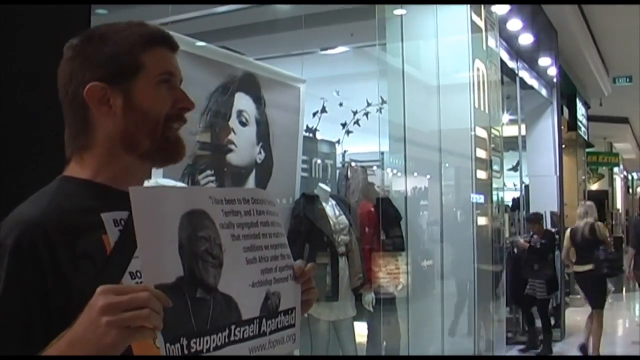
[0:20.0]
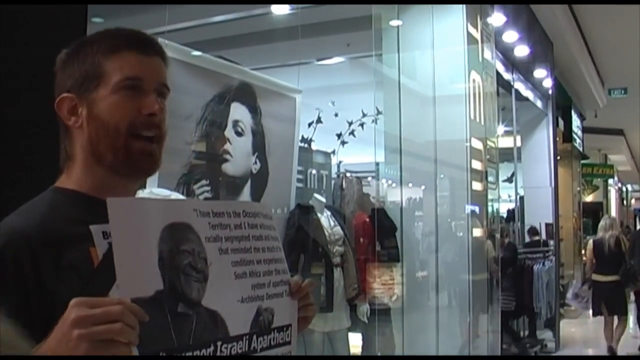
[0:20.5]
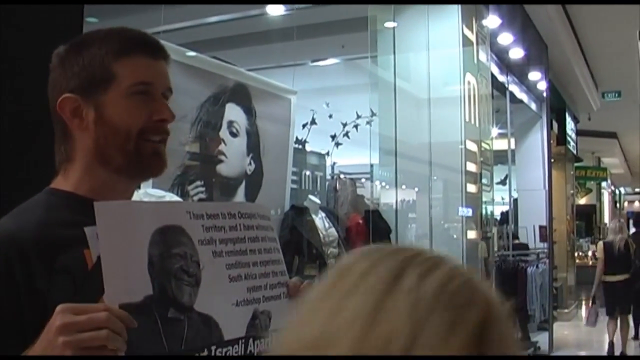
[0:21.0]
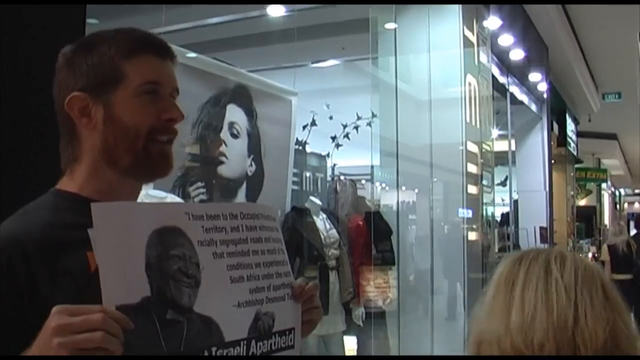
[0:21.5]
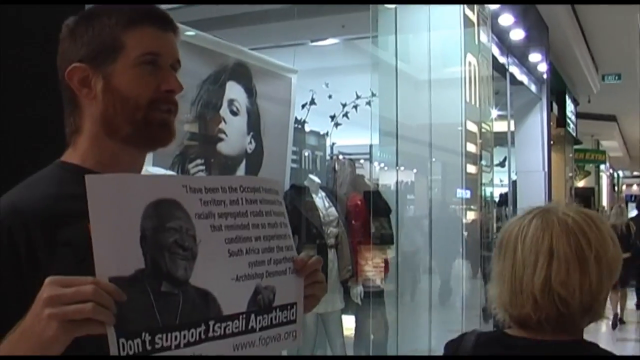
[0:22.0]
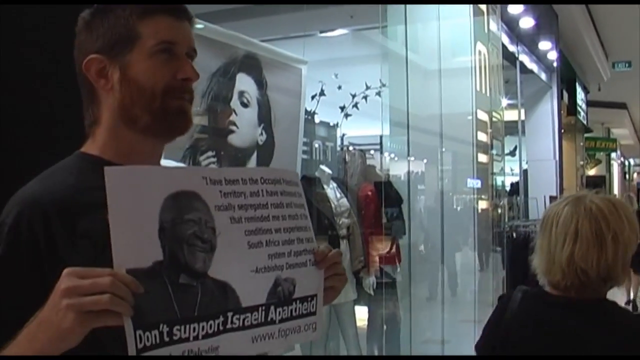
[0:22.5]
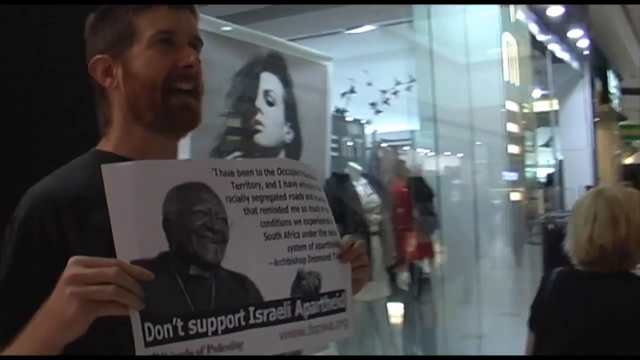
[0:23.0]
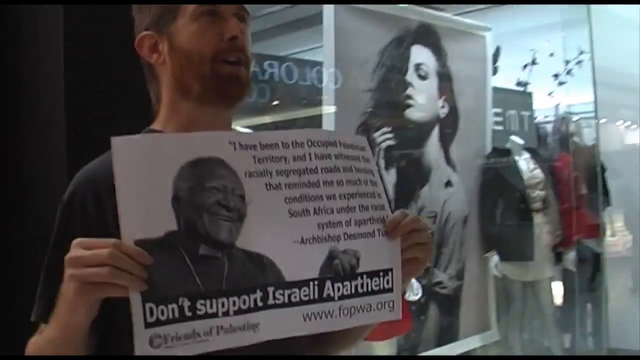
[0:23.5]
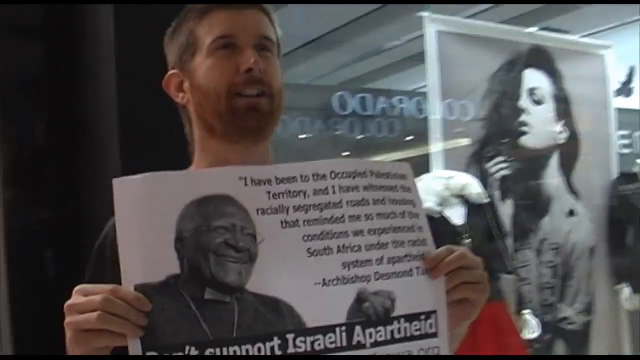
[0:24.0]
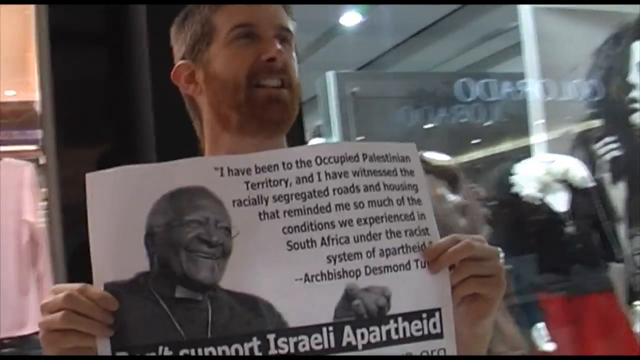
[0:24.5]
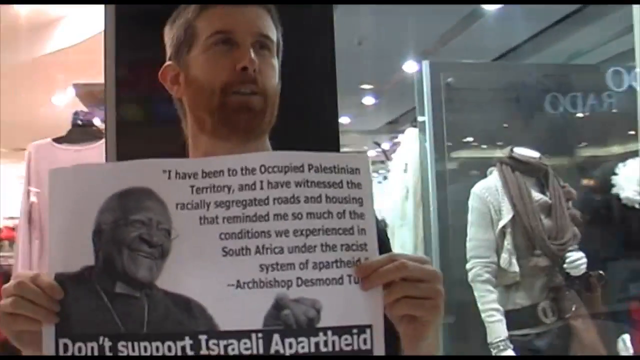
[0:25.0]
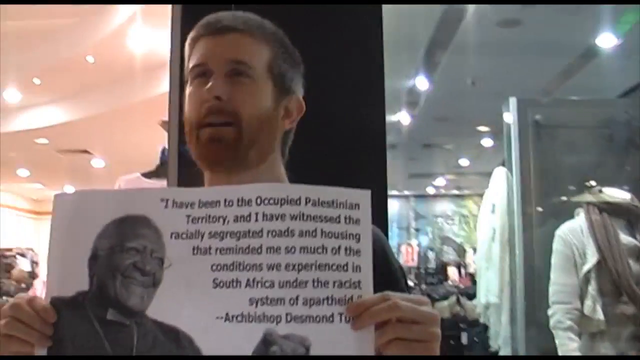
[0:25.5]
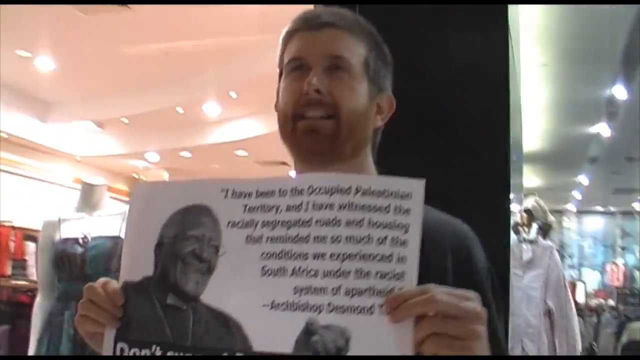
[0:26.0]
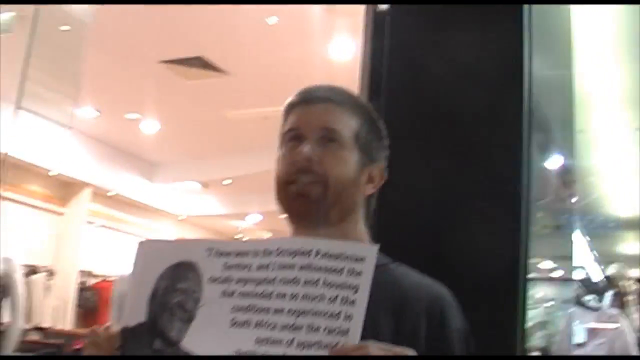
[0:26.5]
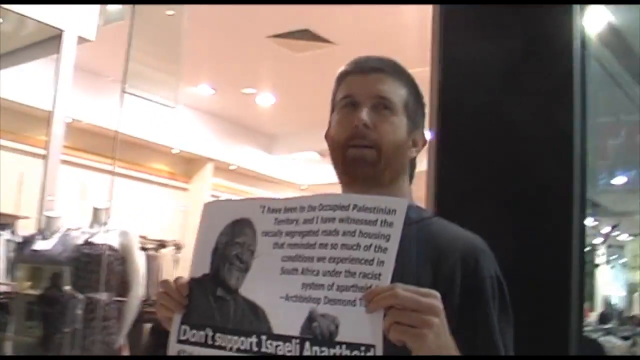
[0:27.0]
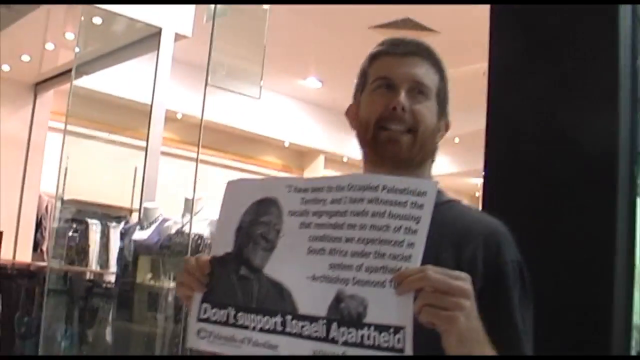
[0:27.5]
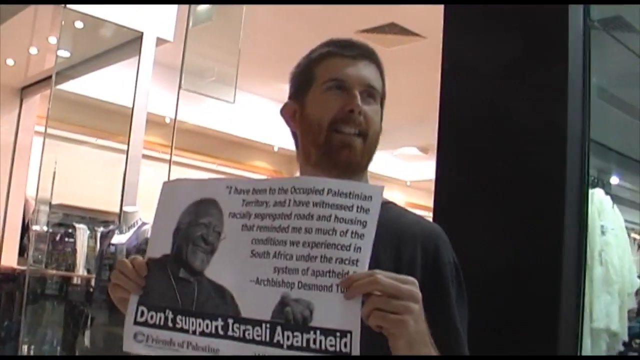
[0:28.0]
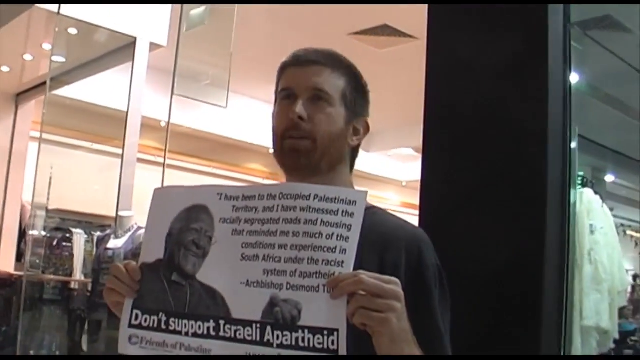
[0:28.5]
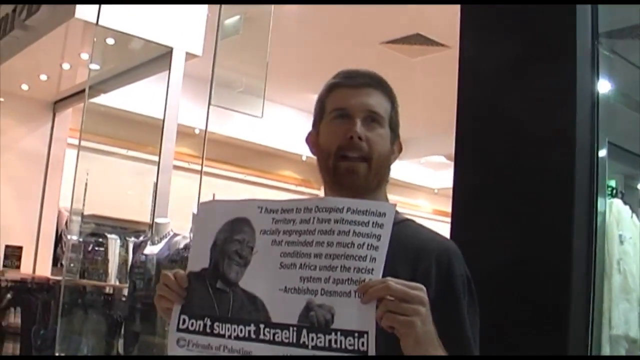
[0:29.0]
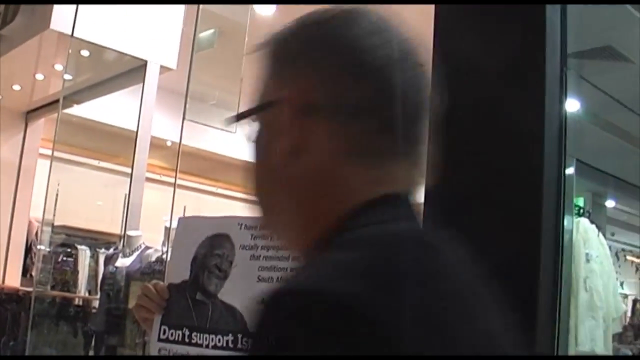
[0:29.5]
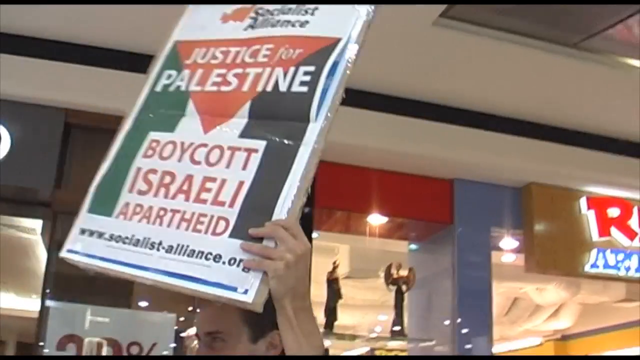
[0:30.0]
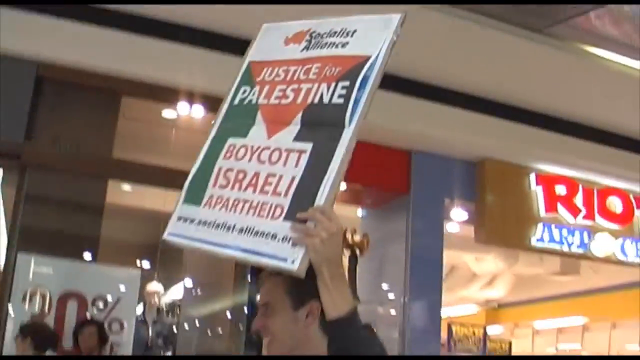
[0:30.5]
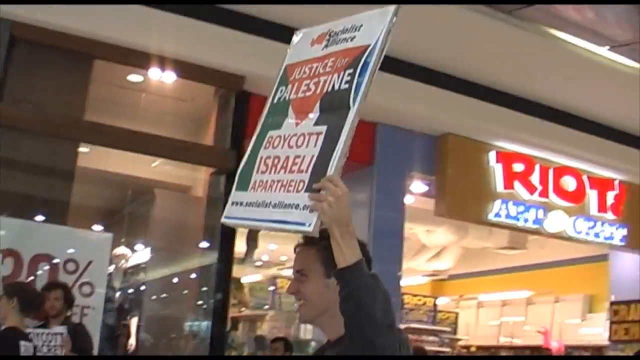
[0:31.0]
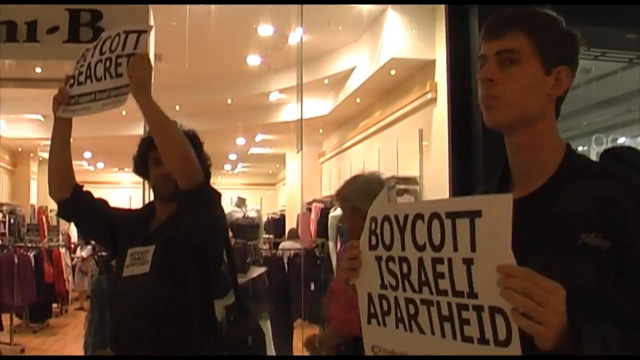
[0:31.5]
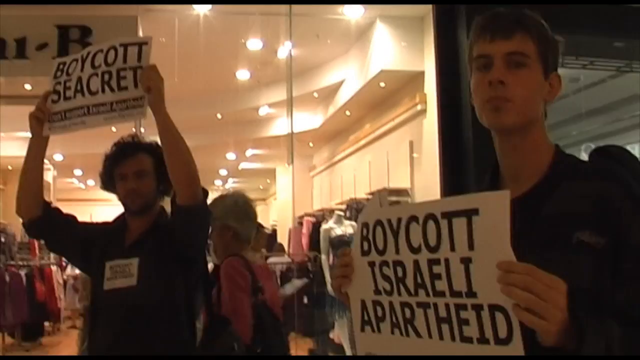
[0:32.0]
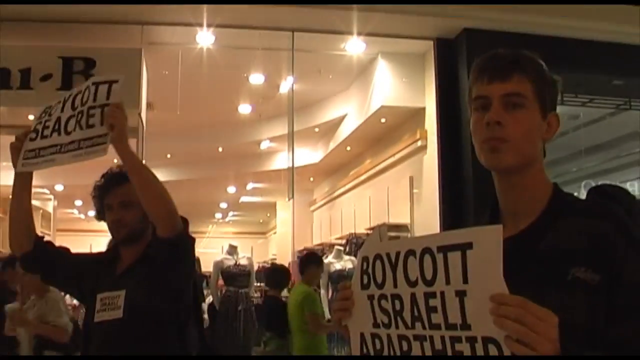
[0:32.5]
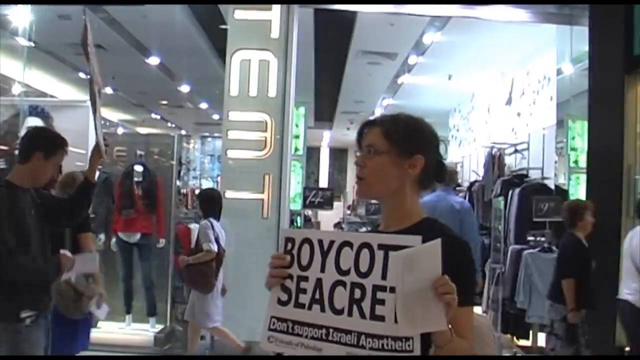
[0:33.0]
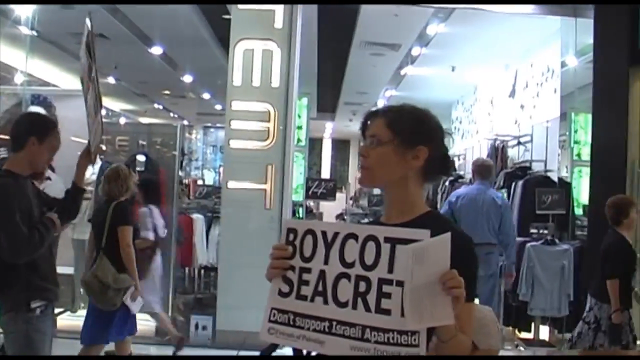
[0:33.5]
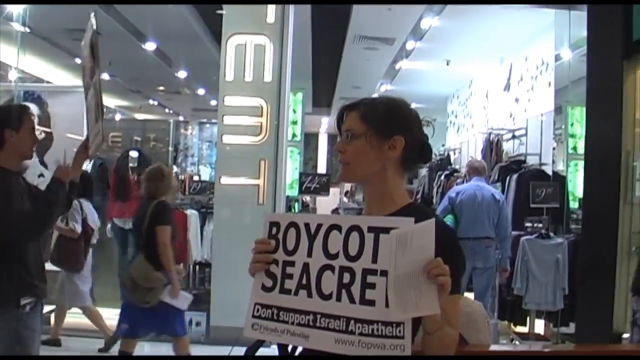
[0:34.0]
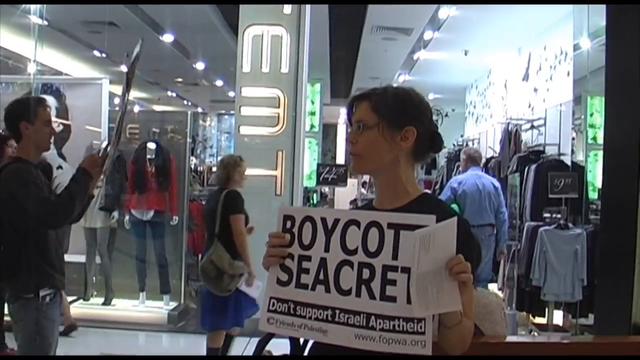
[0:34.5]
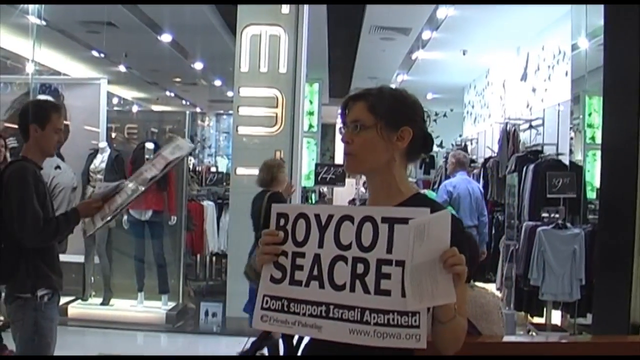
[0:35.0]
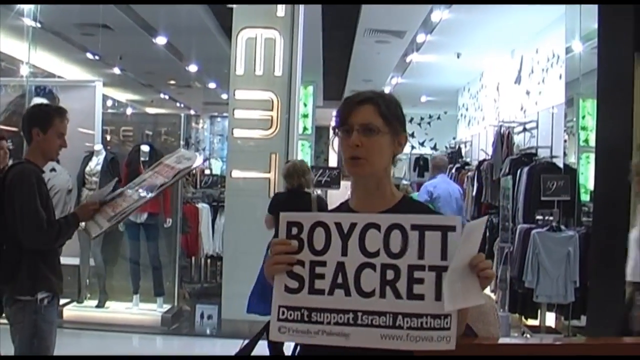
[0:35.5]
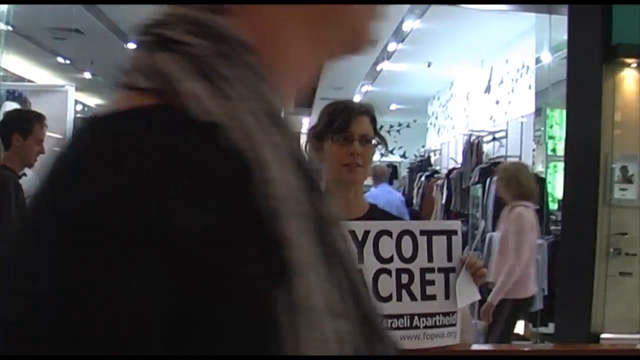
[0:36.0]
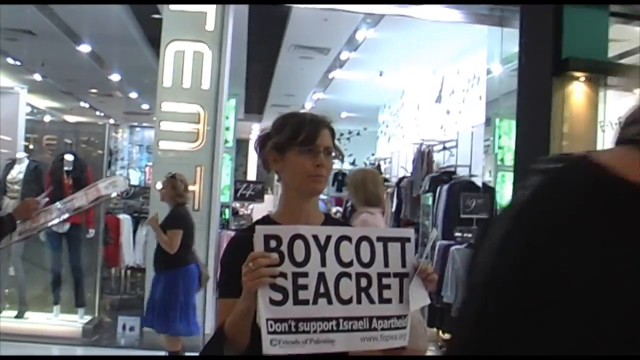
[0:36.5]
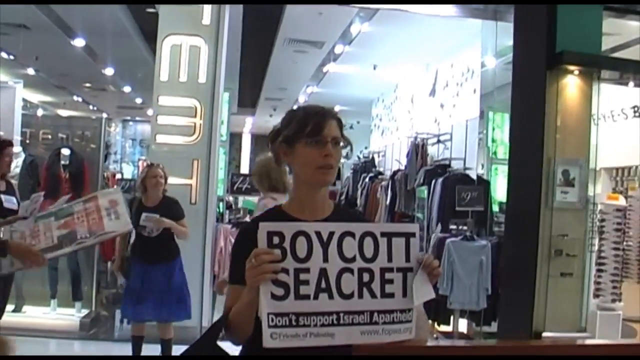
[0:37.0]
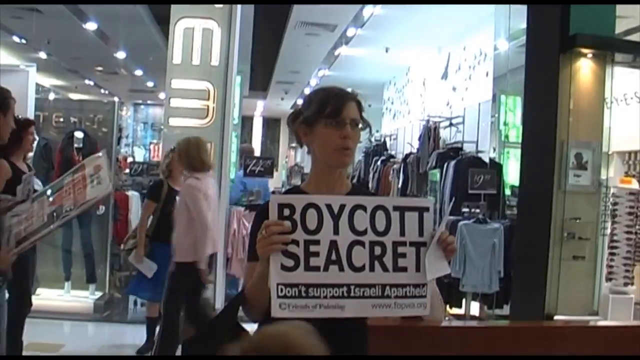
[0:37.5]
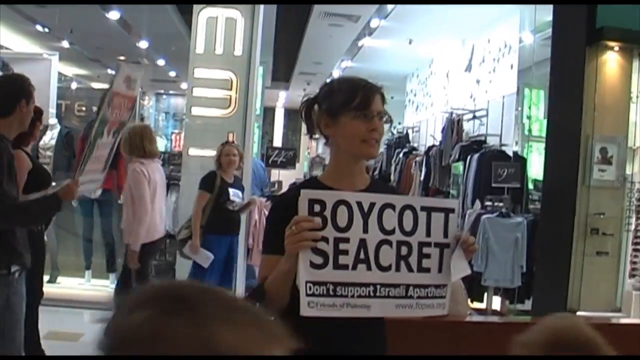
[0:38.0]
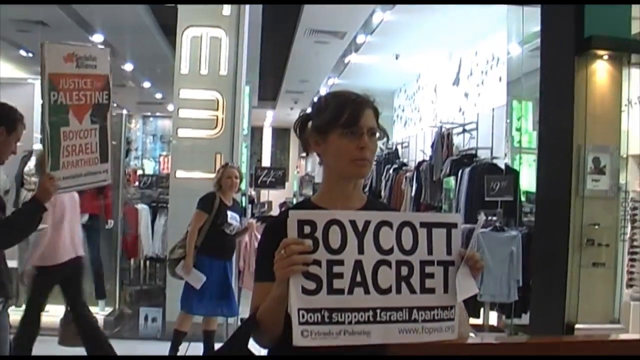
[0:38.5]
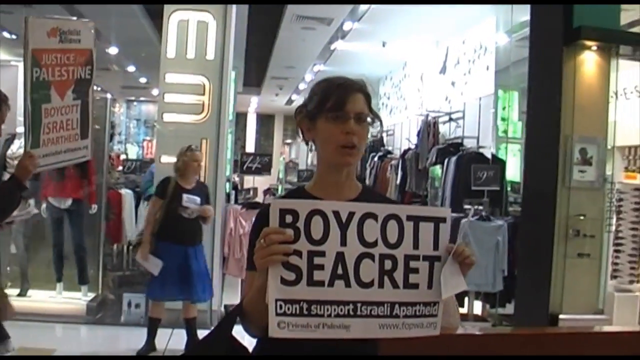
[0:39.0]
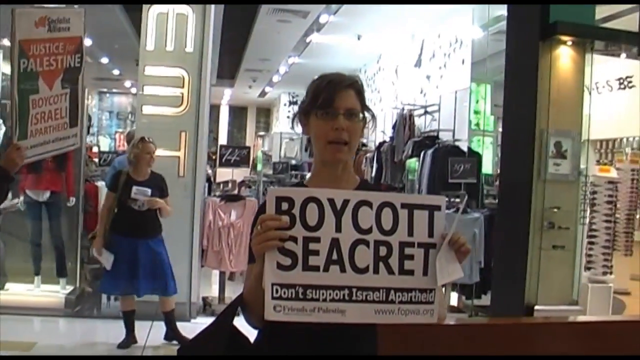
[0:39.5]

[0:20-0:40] An indoor demonstration takes place in a mall. Many people hold up signs, including a woman and a couple of young men. One sign reads "I have been to the occupied territory and I have been witness to the racially segregated roads and housings that reminded me so much of the conditions we experienced in South Africa under the racist regime of apartheid." Another poster reads "boycott secret."